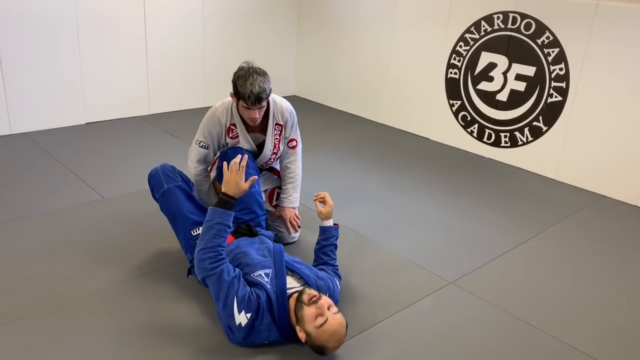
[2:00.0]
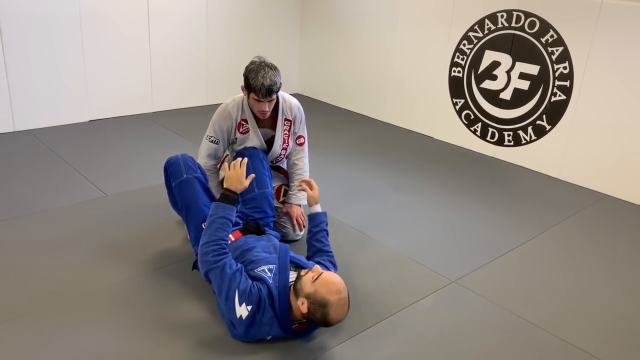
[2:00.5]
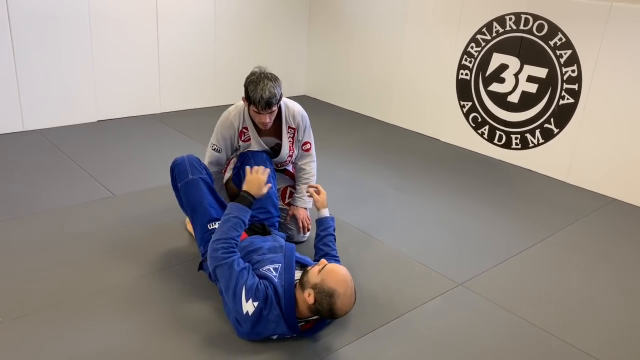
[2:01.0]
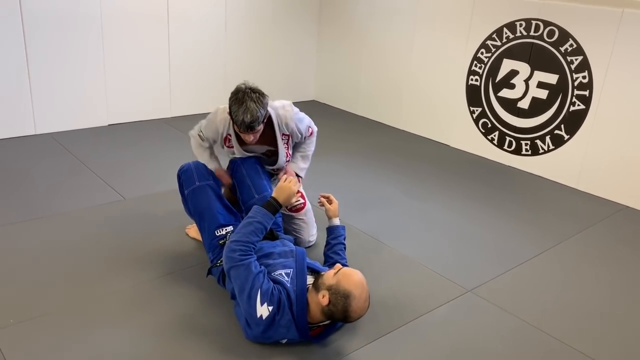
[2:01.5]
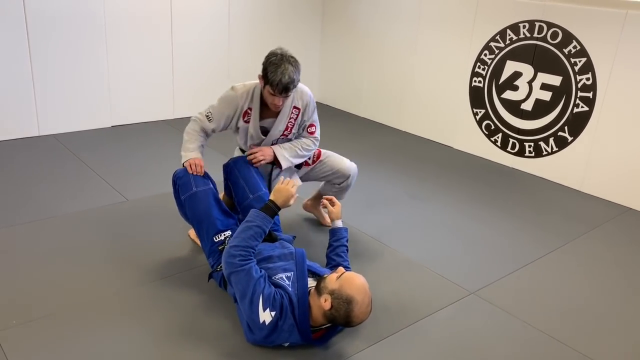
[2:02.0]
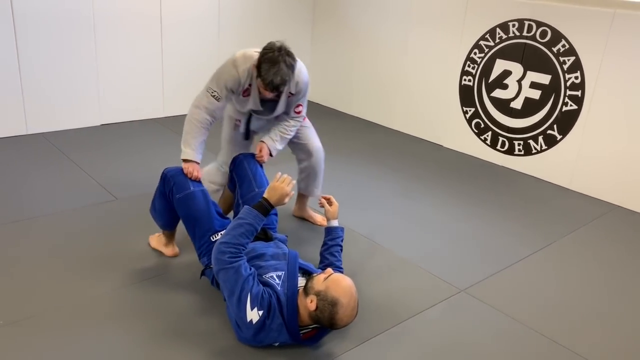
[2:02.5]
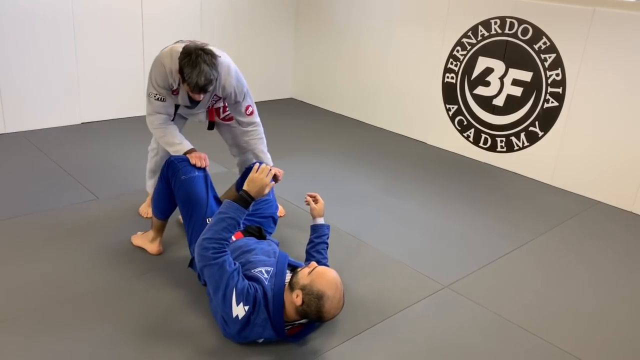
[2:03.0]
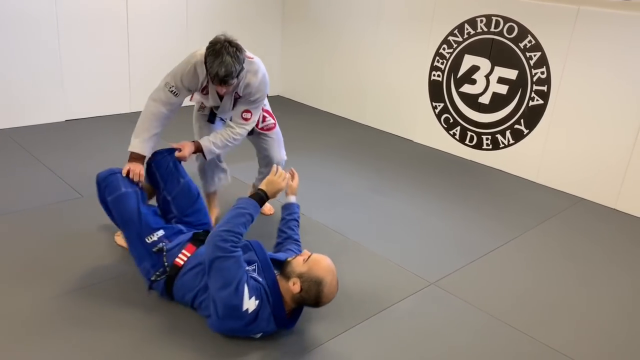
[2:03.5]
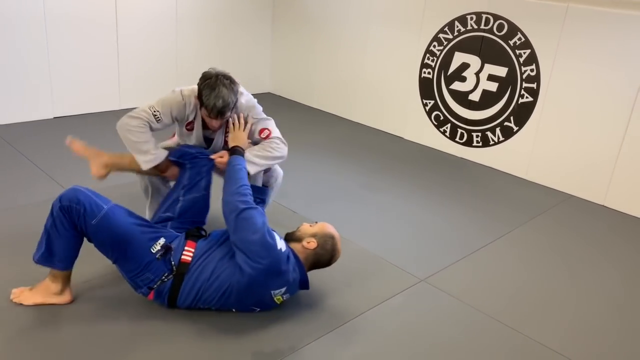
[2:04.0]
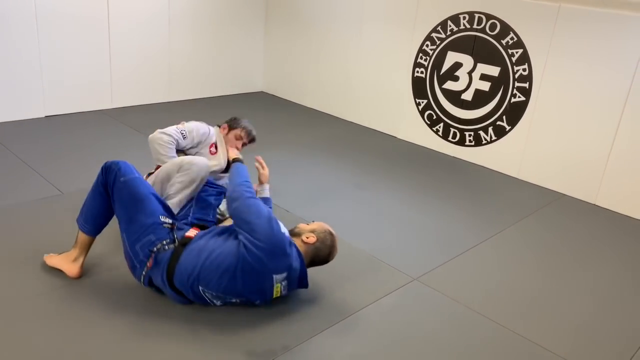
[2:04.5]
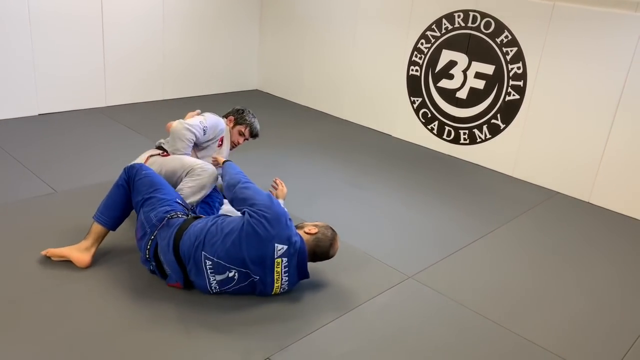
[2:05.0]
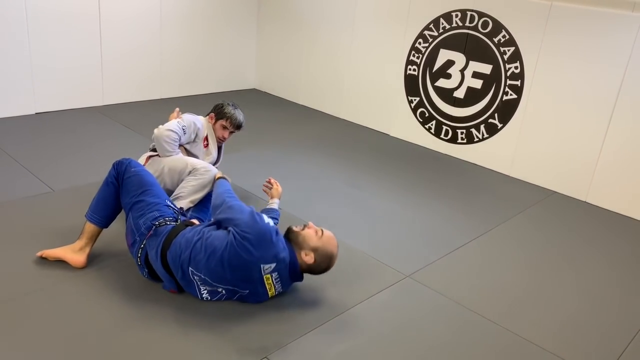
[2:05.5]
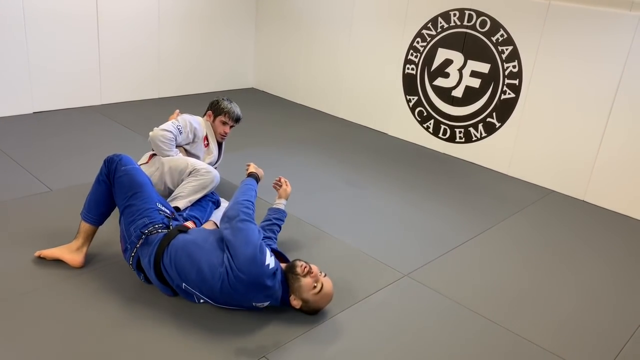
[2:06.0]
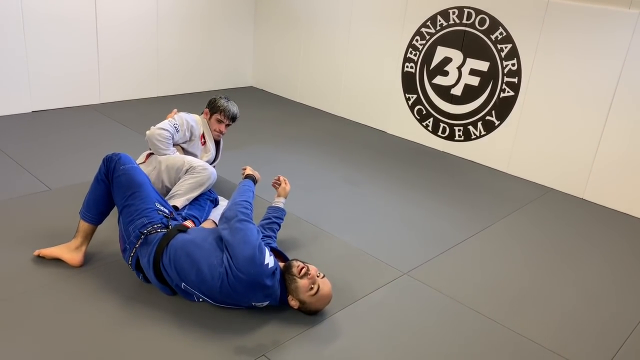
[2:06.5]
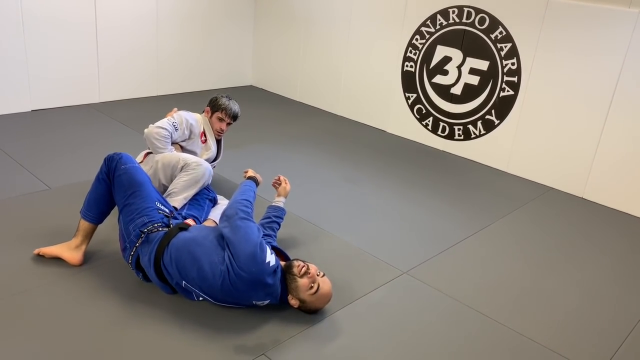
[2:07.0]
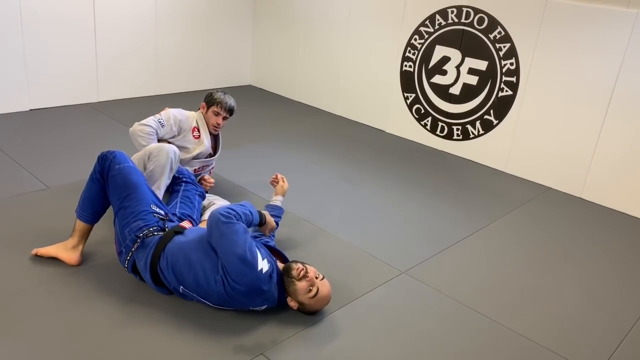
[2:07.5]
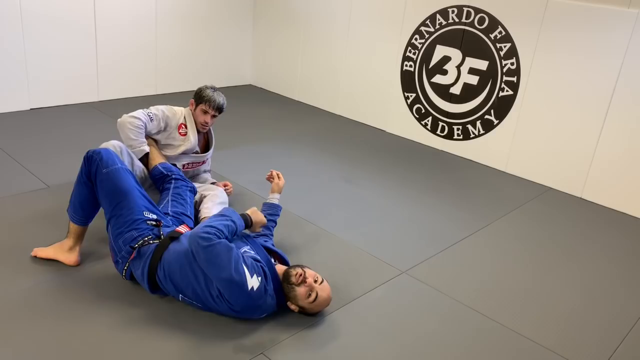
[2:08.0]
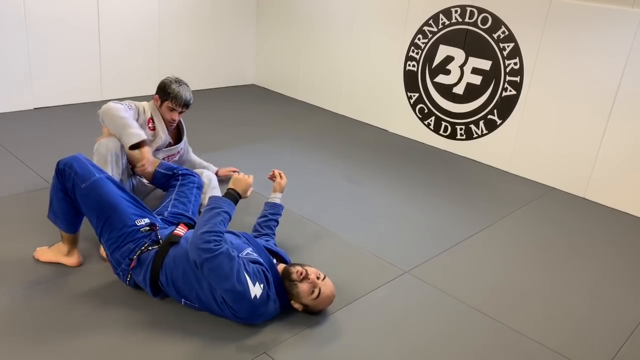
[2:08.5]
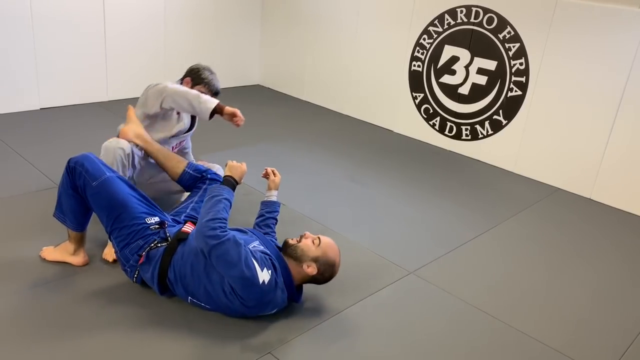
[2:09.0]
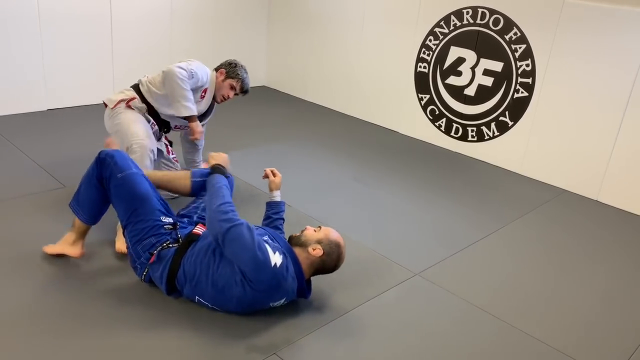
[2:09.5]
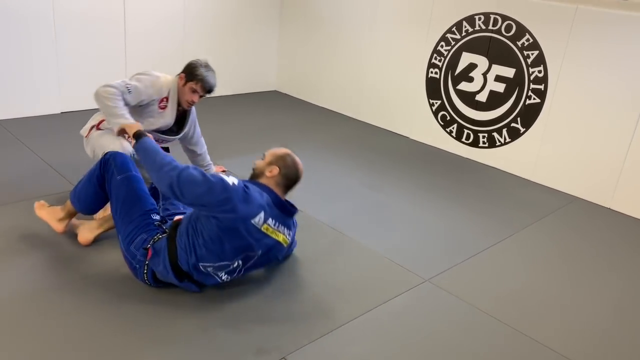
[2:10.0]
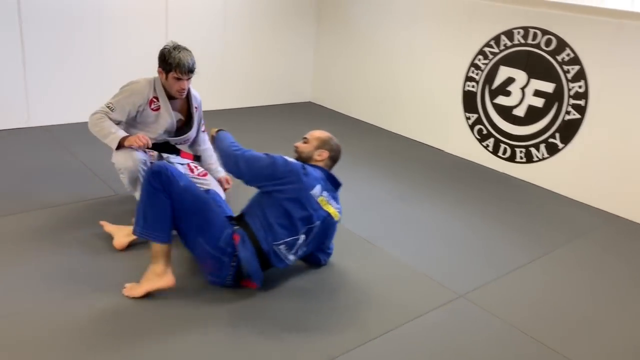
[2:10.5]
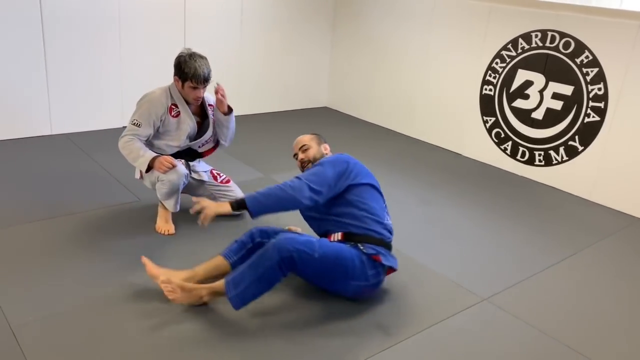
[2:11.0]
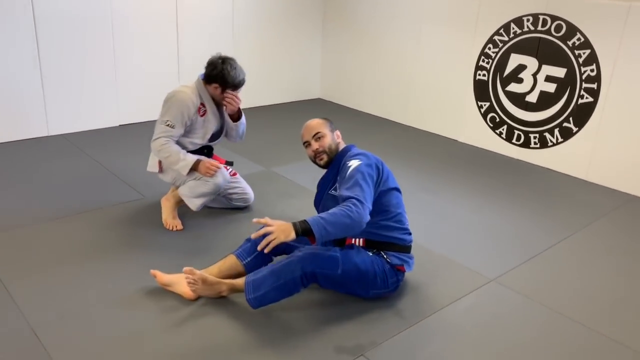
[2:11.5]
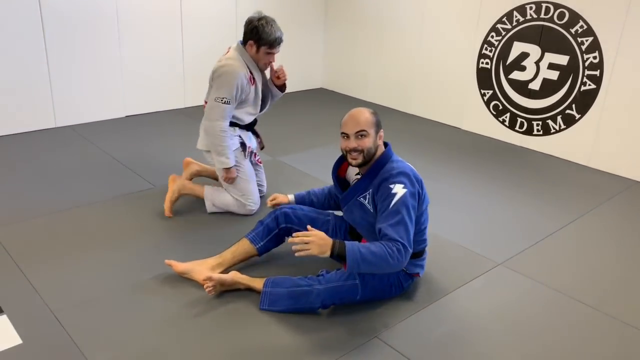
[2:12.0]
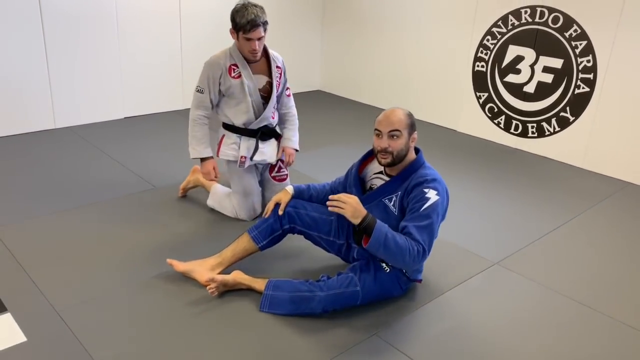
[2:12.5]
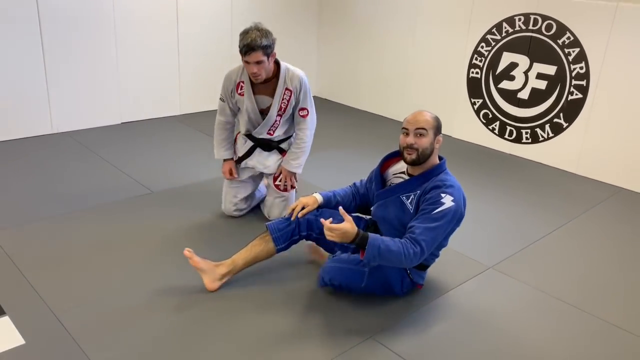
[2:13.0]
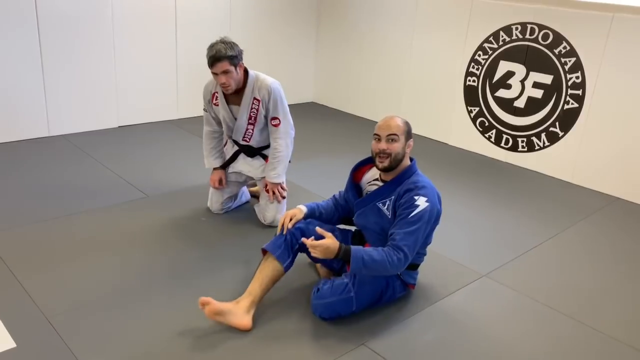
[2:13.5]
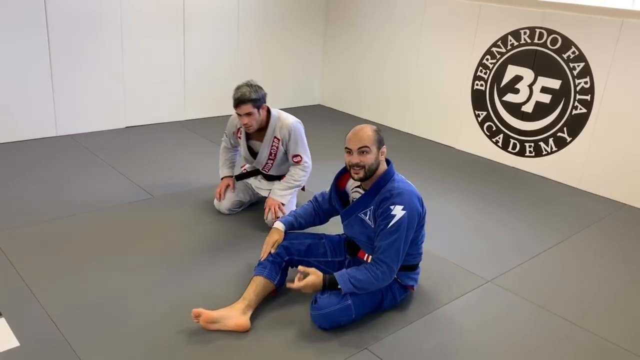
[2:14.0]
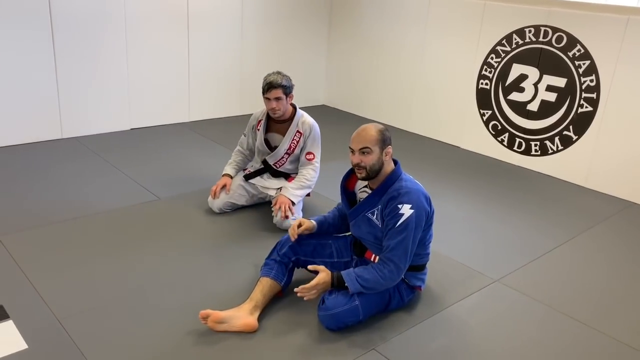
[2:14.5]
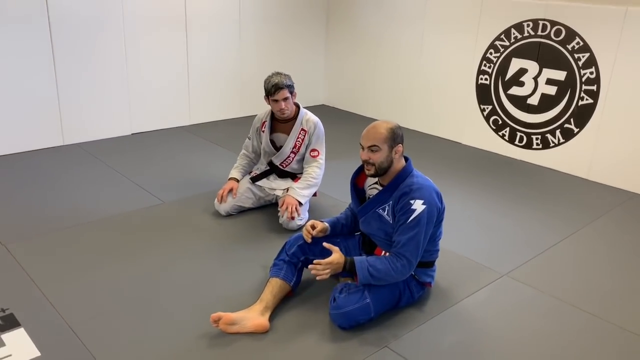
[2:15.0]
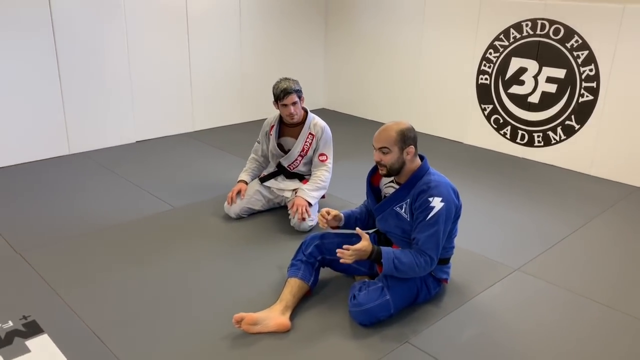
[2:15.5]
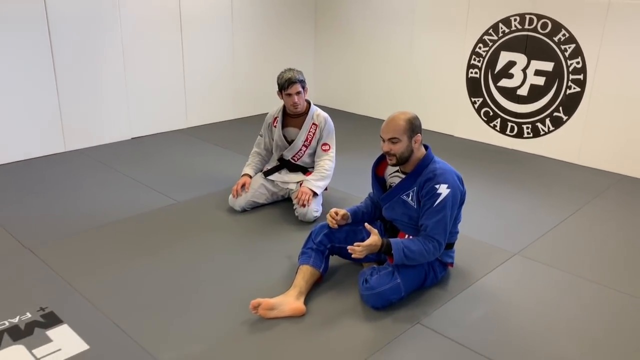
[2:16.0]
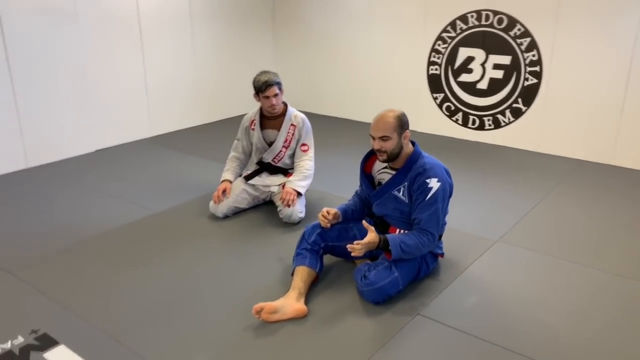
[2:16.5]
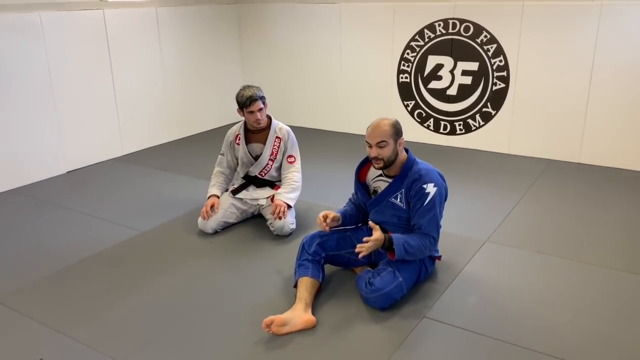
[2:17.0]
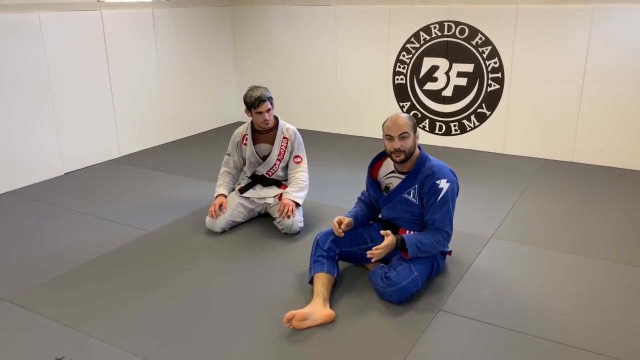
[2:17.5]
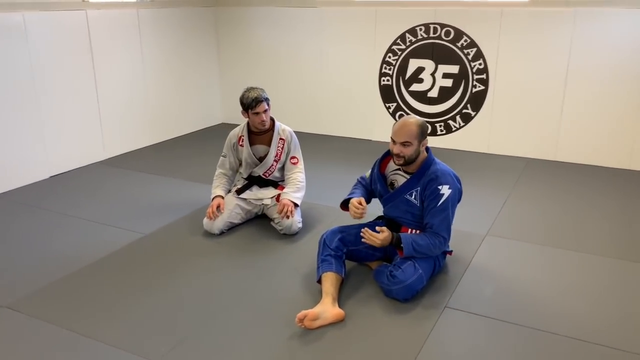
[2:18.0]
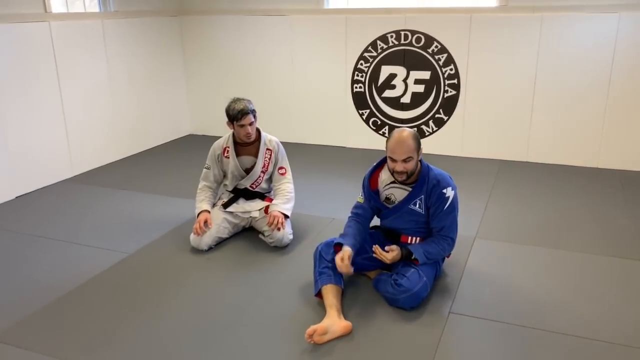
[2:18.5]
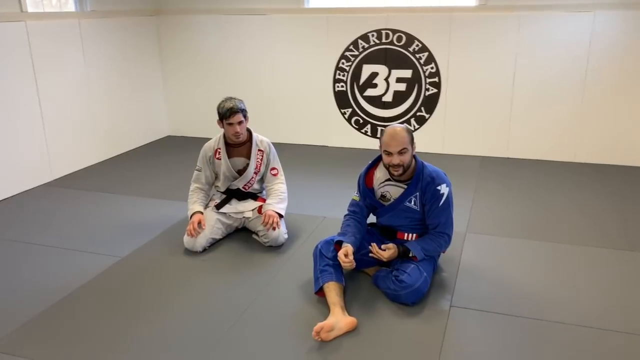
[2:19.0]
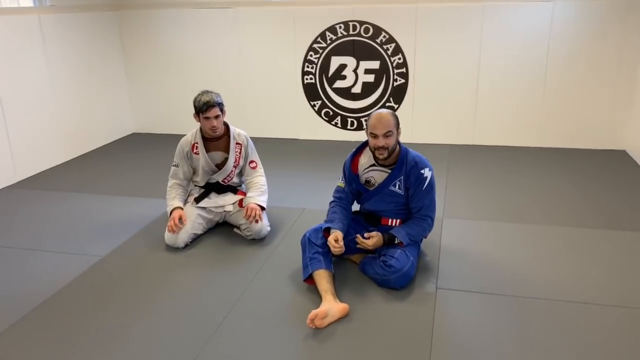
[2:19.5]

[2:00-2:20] The man in the blue uniform lies all the way down on his back again, his legs not spread out but still bent. The camera views him from the direction of his head rather than from the side. His left arm is all the way over to the back, and his right forearm is bent and raised in the air. The man in the white uniform gets up and does the same move again while the man in blue talks, apparently explaining the move. He then gets up, sits down, crosses his legs, and uses his hands as he talks, sometimes raising them.